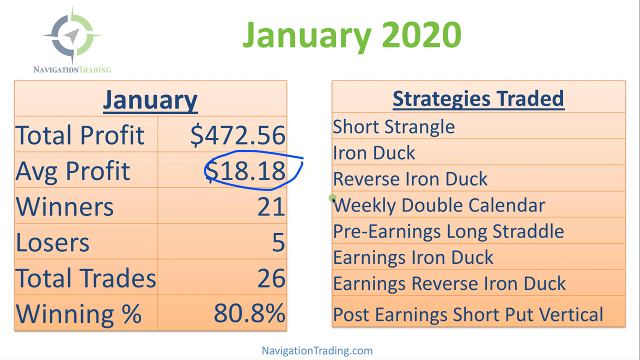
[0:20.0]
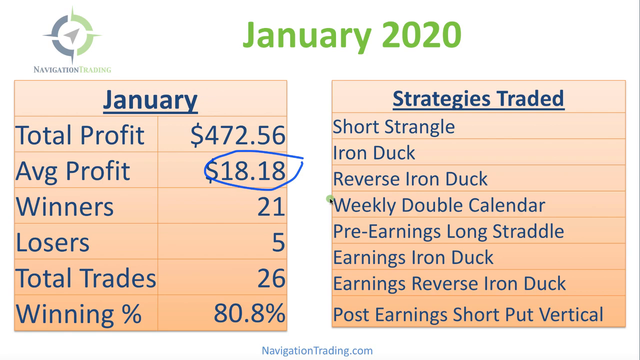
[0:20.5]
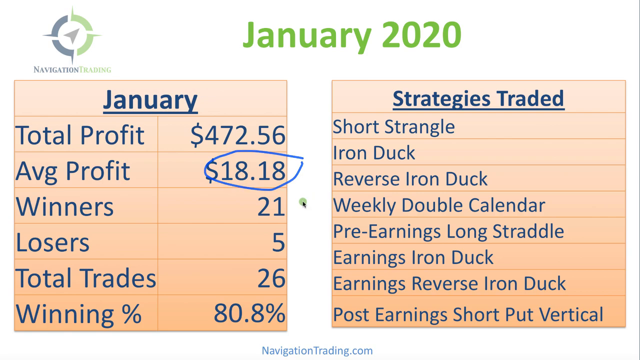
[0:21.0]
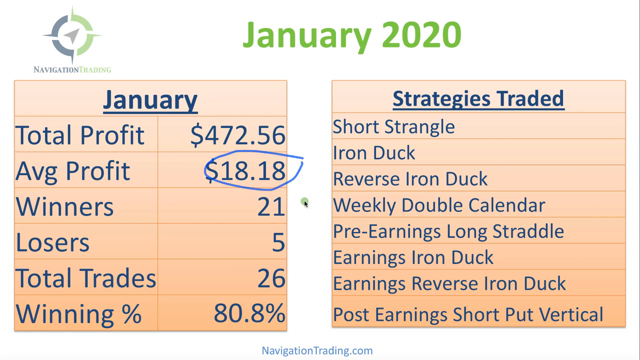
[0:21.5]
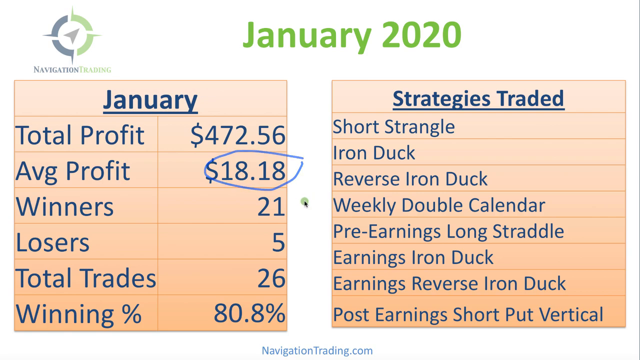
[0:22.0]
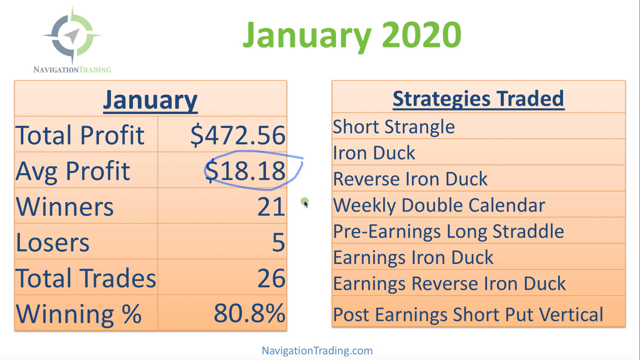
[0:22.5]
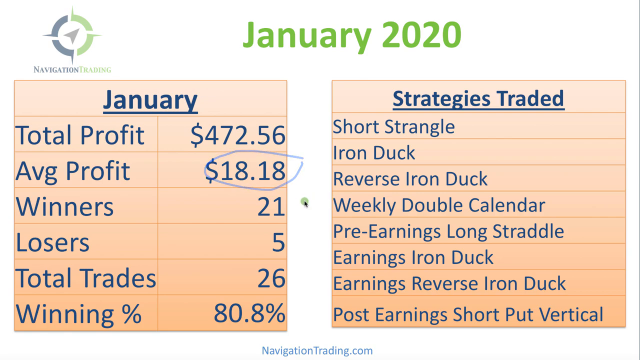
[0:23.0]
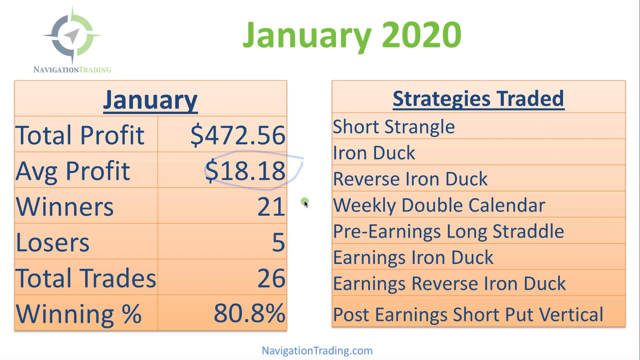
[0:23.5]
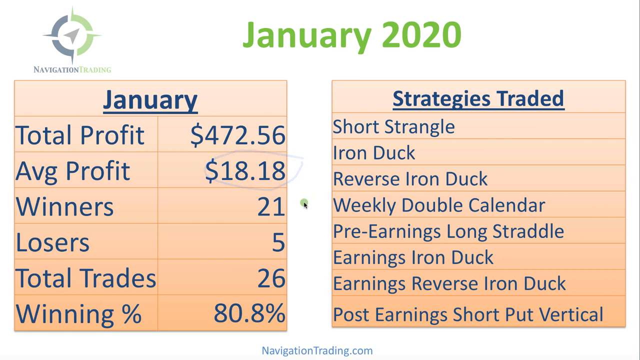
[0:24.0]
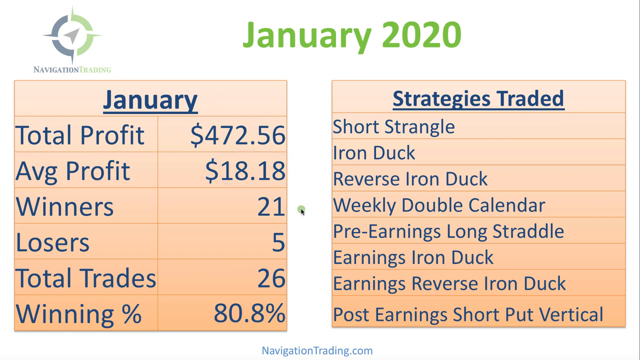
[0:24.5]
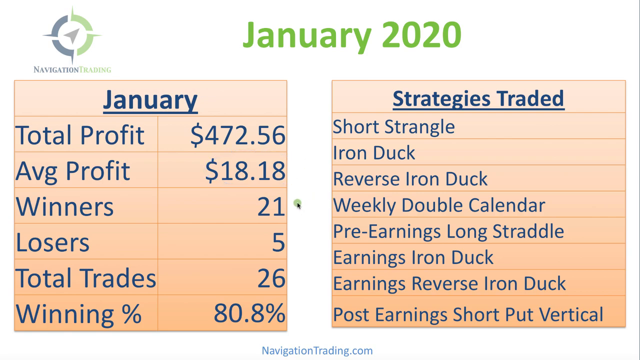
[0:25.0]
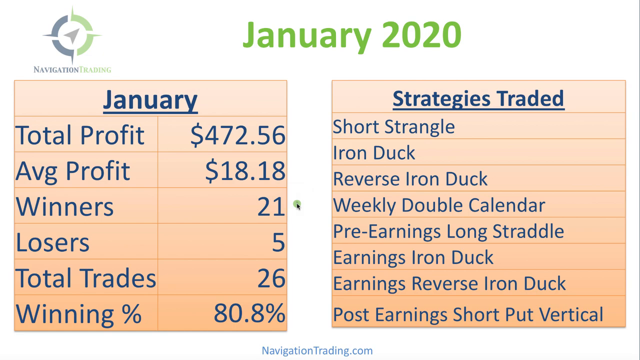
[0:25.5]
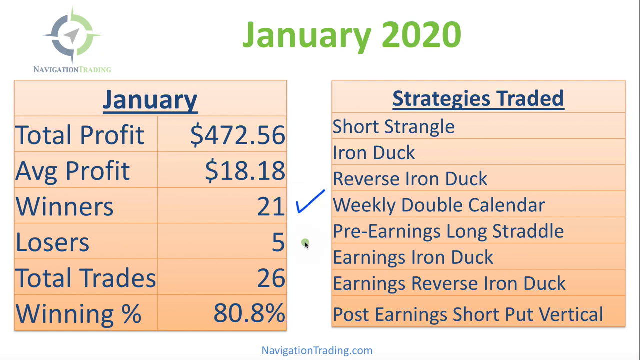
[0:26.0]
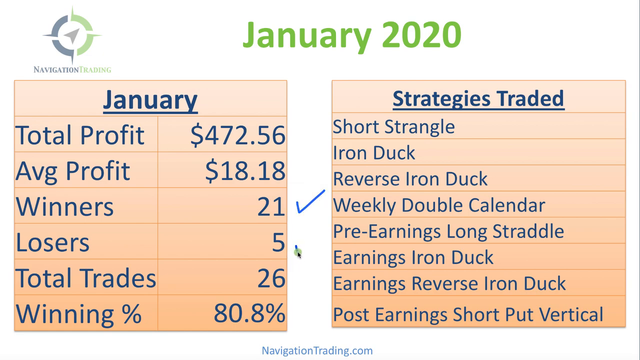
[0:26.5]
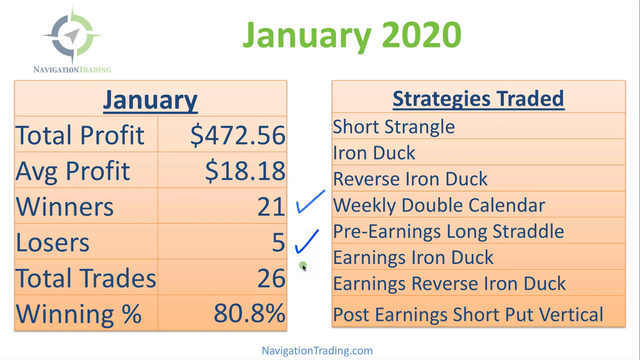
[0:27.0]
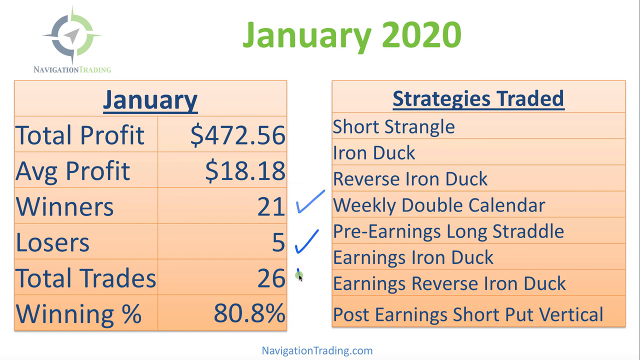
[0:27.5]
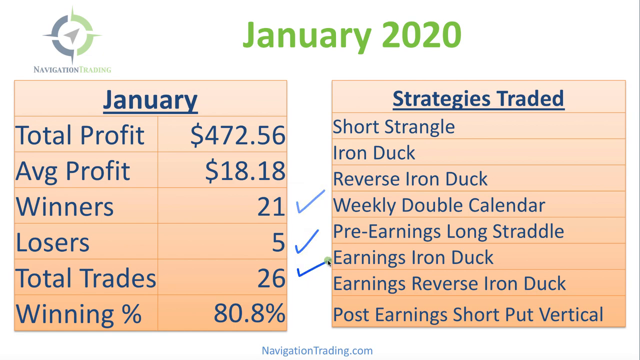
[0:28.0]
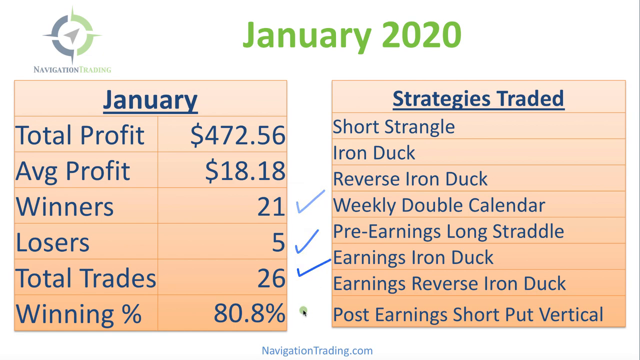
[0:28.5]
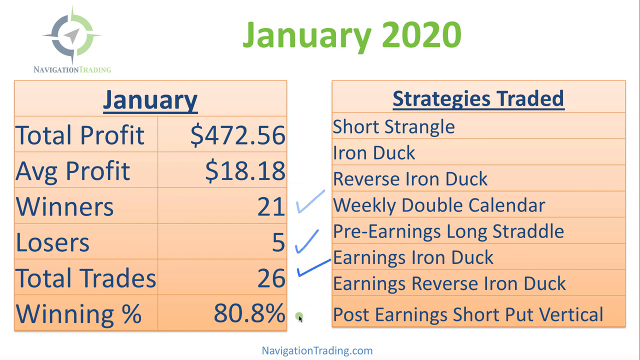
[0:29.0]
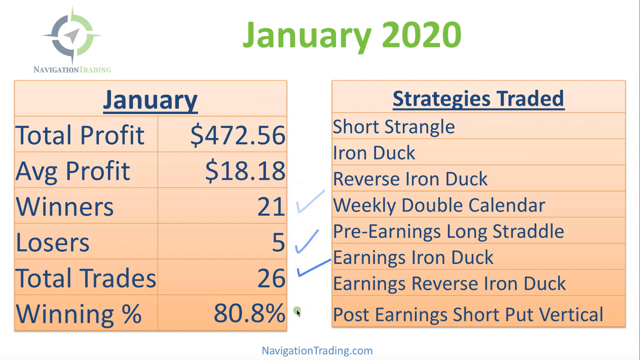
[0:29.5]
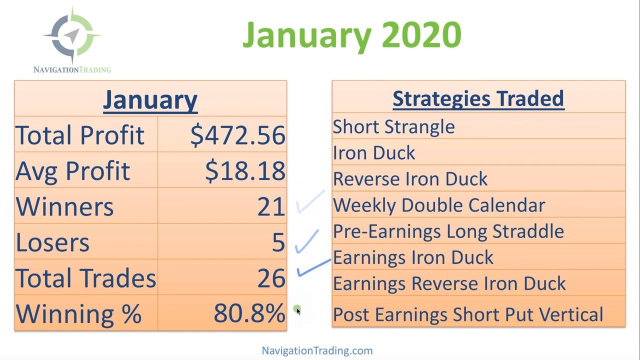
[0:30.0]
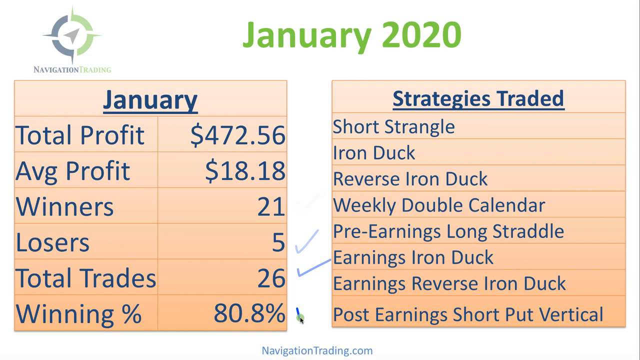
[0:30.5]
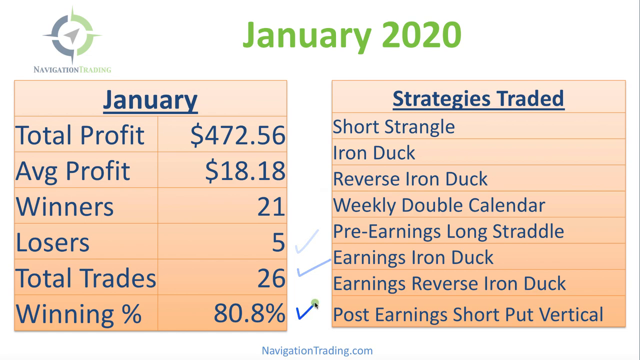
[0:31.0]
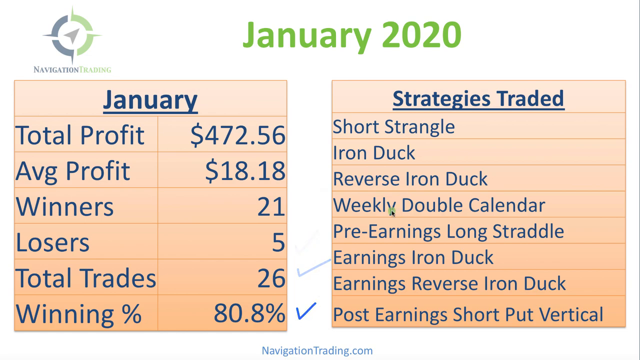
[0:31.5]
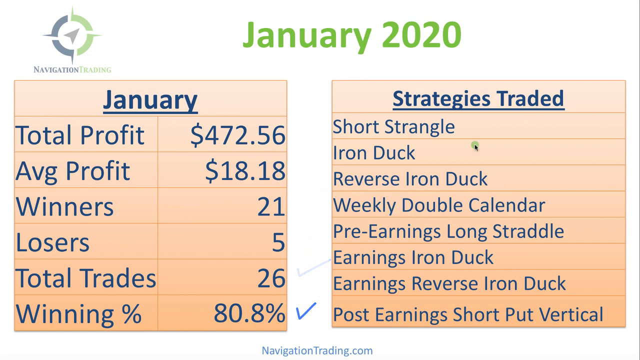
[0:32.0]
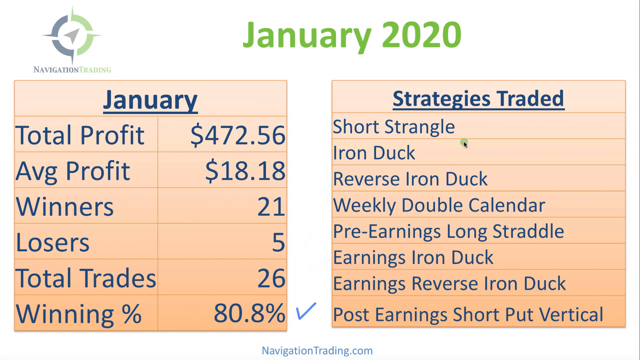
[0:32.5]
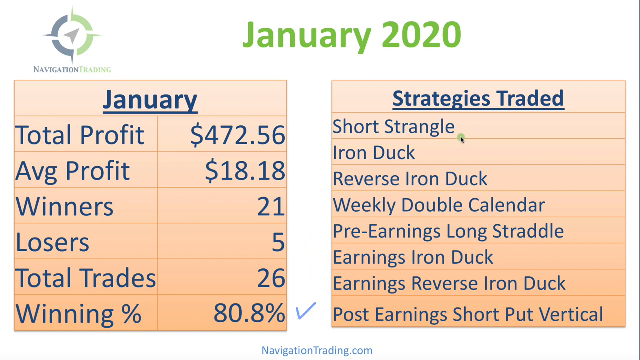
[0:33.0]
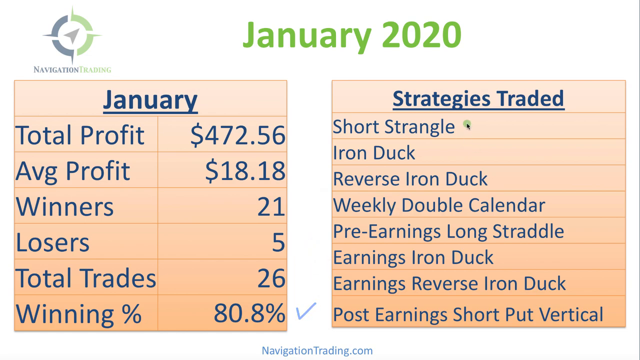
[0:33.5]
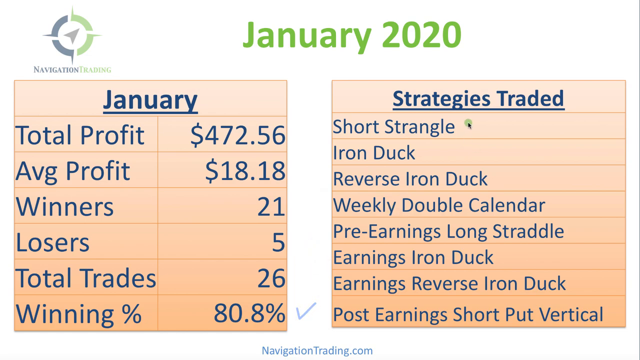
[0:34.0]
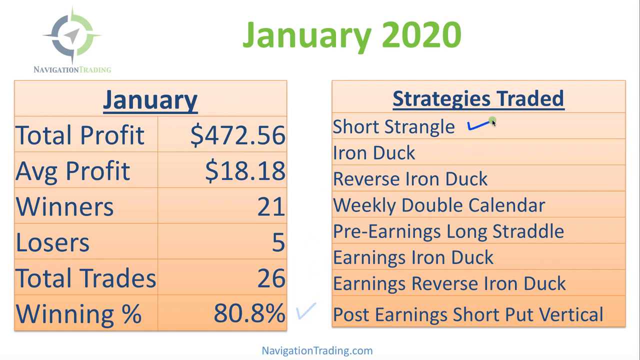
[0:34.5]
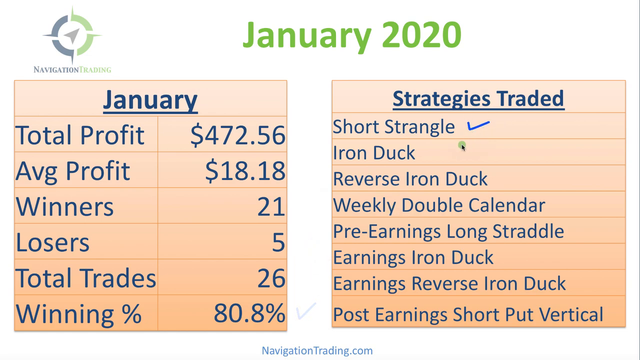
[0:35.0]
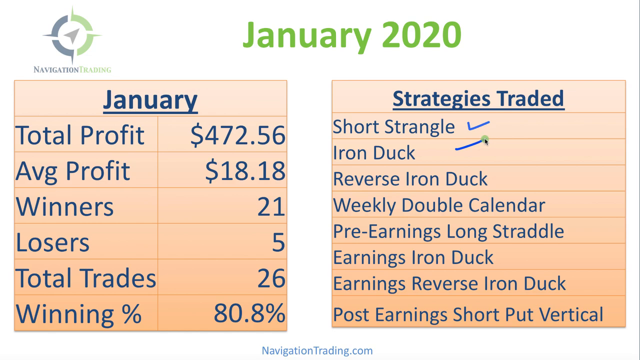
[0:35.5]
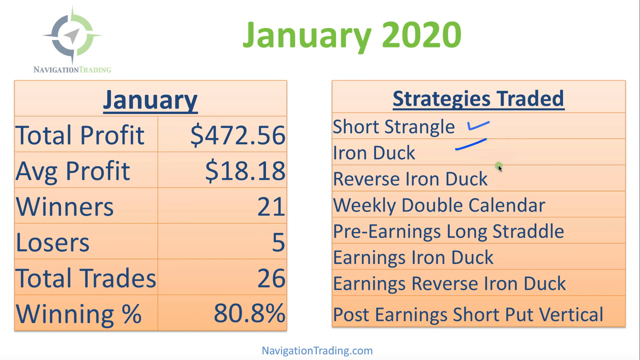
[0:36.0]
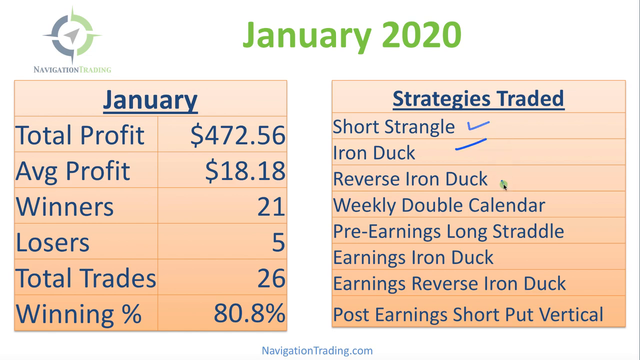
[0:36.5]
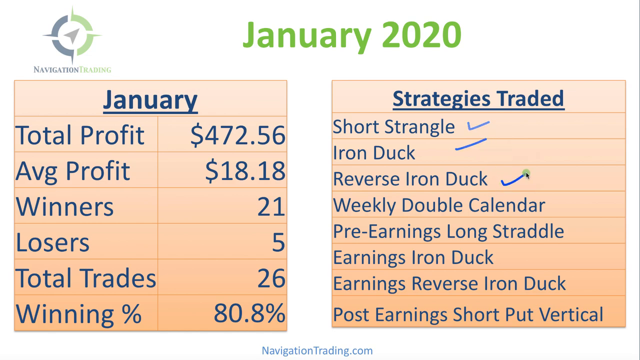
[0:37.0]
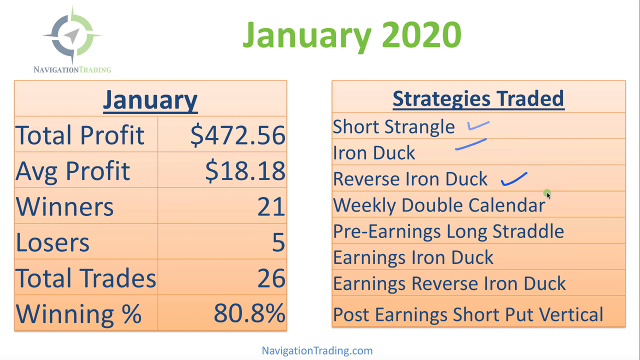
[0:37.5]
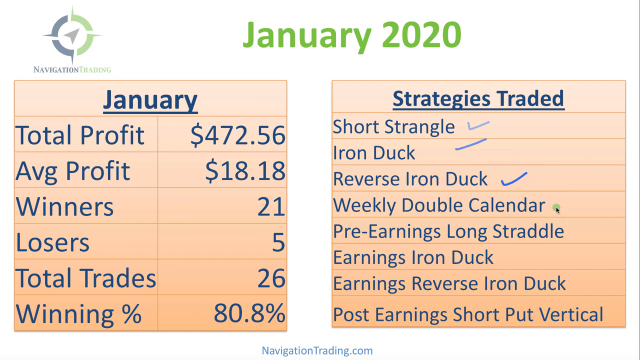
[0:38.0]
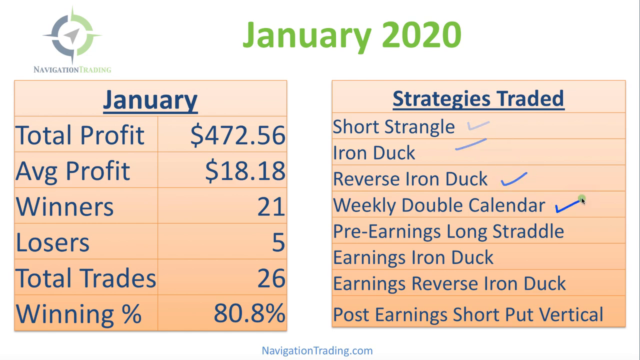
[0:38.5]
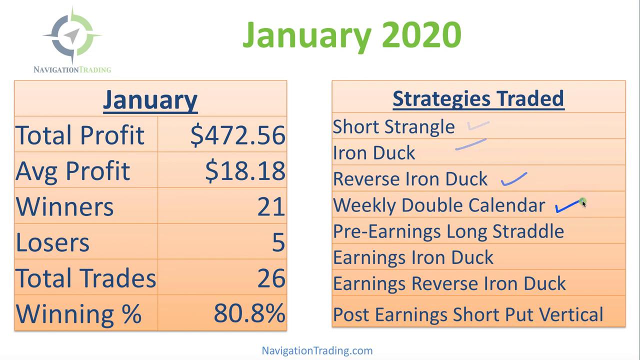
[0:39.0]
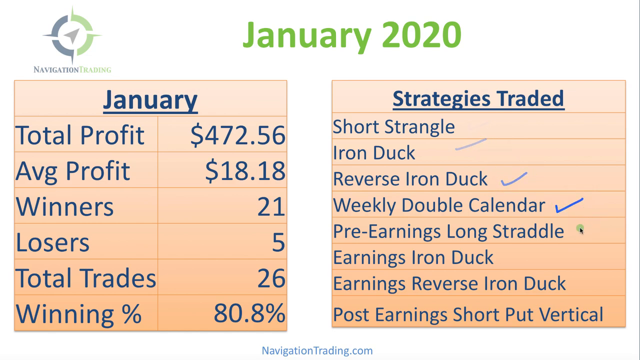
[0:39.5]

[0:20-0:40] The screen shows January and the strategies traded, with areas for total profit, average profit, winners, losers, total trades and winning percentage. Other areas list strategies such as short strangle, iron duck, reverse iron duck, double calendar, pre-earnings straddle, earnings iron duck, earnings reverse iron duck and post earnings short iron vertical. The month and year are shown with blue text above an orange background.